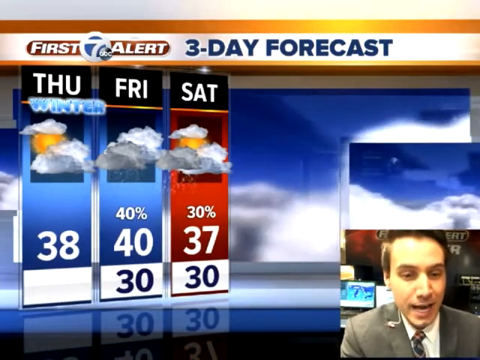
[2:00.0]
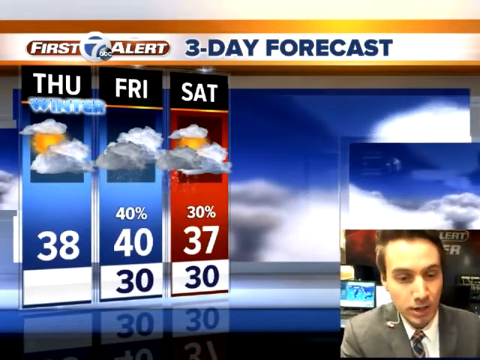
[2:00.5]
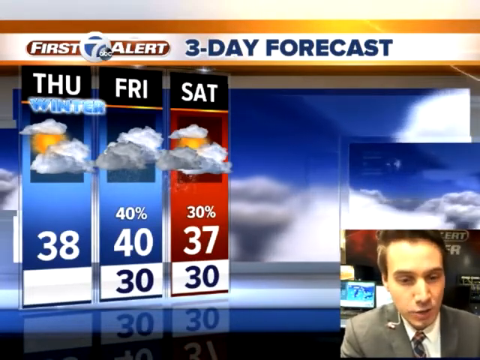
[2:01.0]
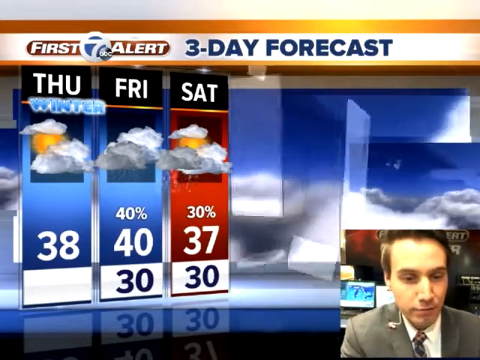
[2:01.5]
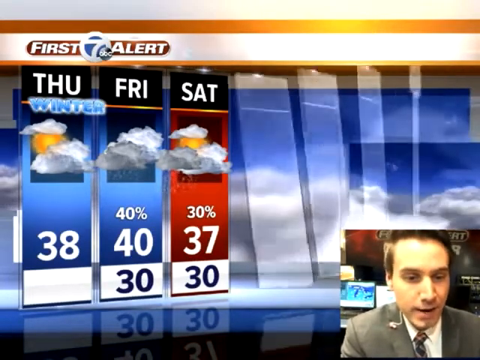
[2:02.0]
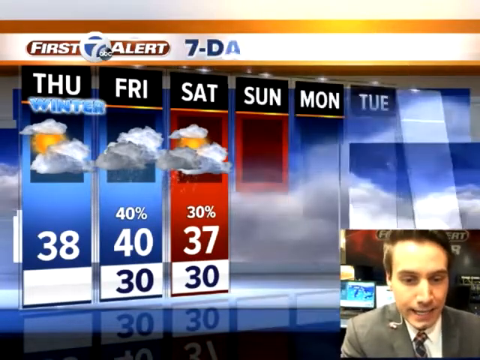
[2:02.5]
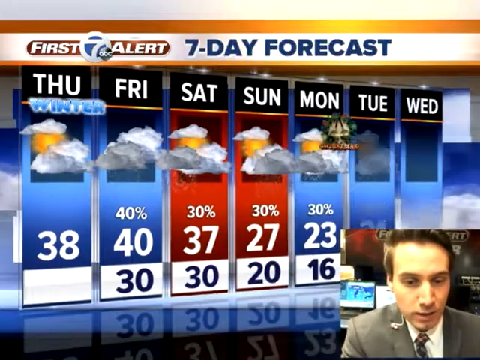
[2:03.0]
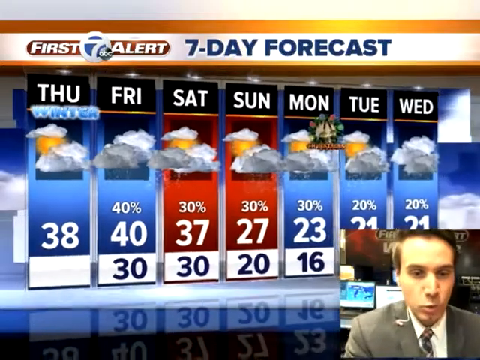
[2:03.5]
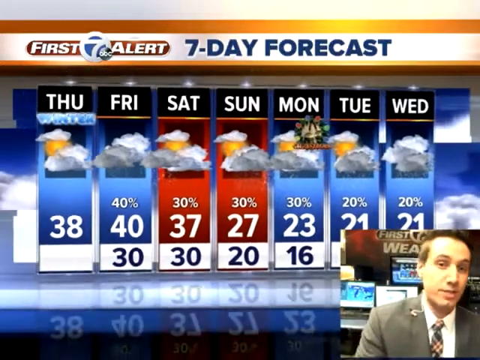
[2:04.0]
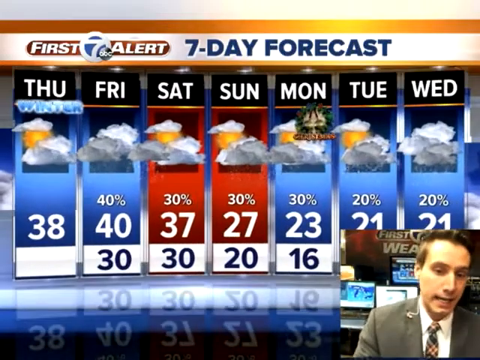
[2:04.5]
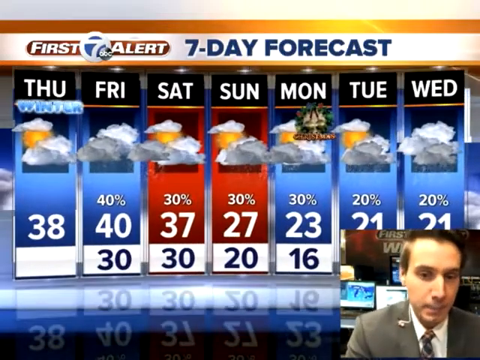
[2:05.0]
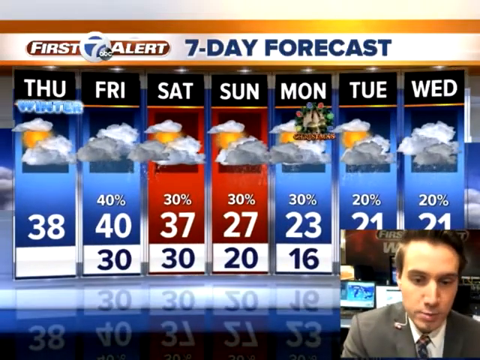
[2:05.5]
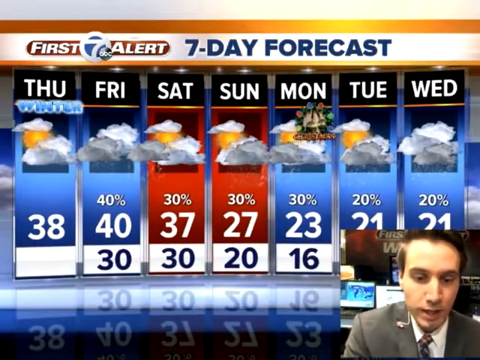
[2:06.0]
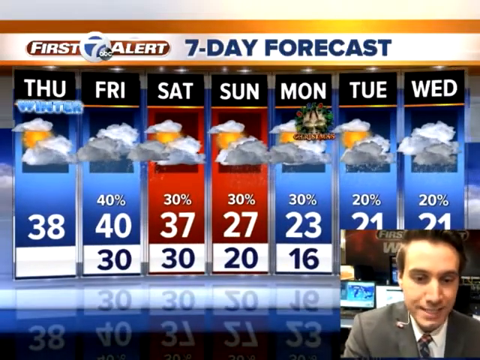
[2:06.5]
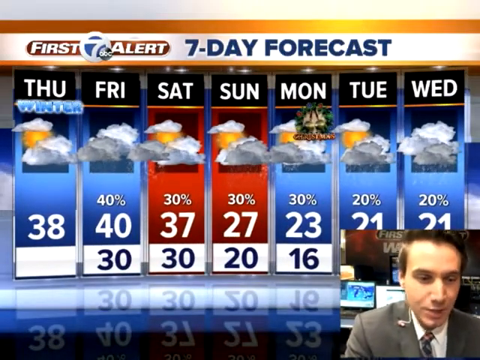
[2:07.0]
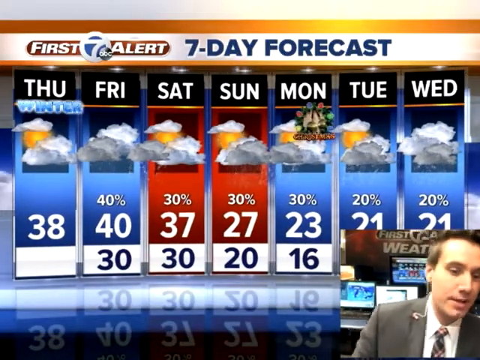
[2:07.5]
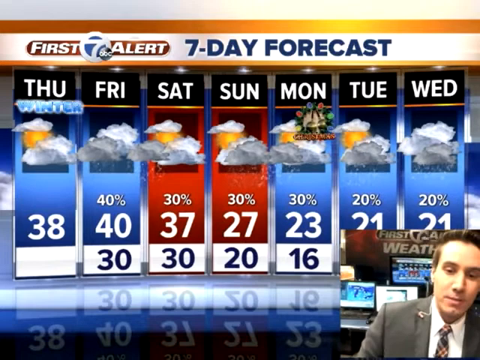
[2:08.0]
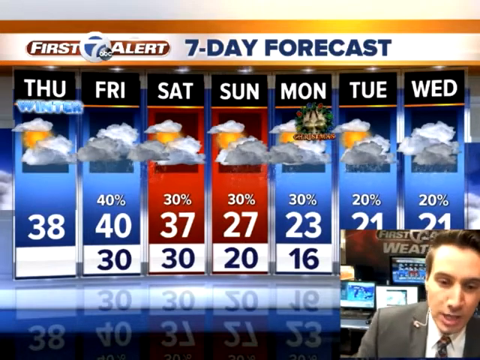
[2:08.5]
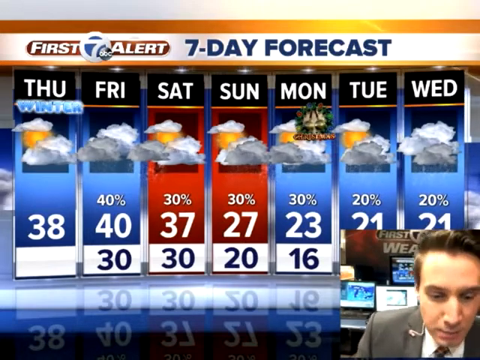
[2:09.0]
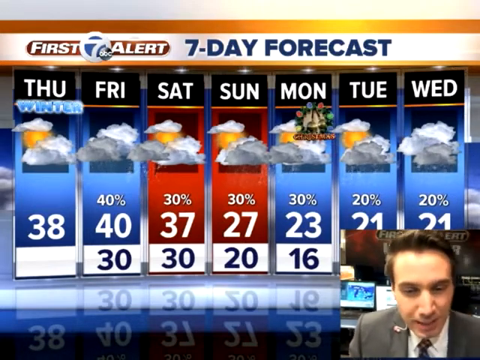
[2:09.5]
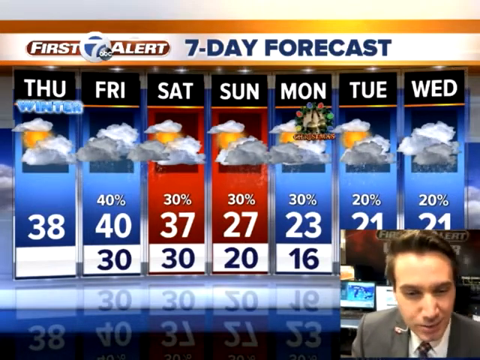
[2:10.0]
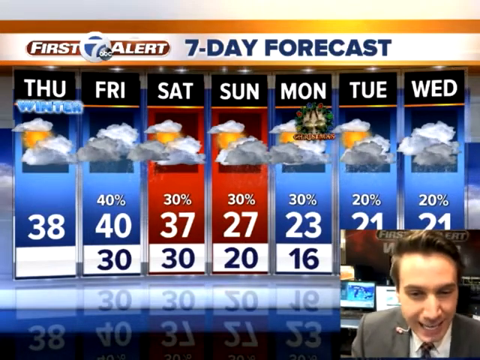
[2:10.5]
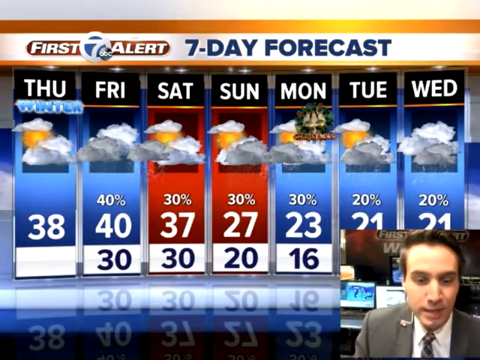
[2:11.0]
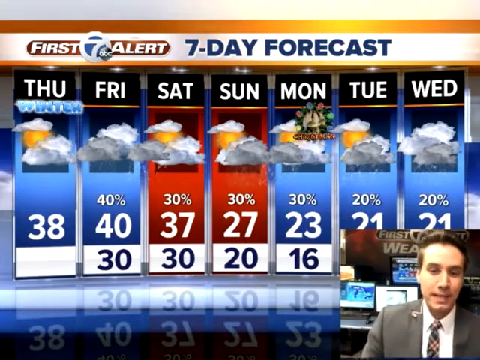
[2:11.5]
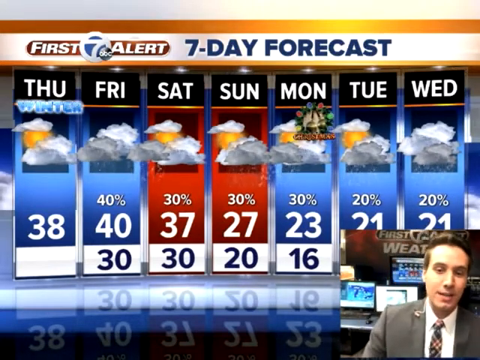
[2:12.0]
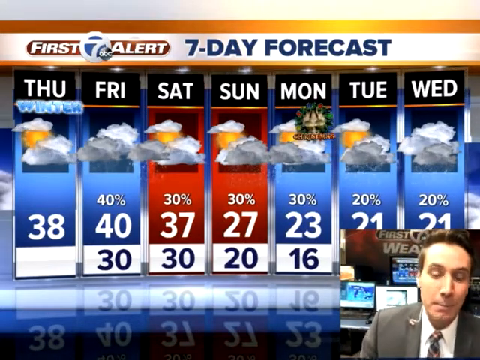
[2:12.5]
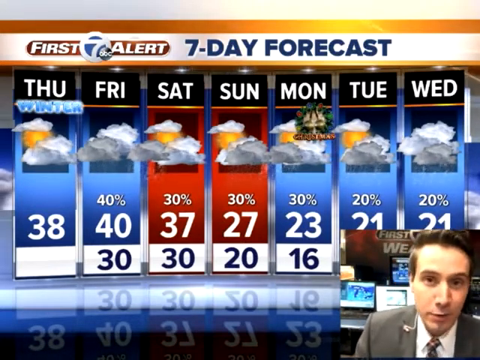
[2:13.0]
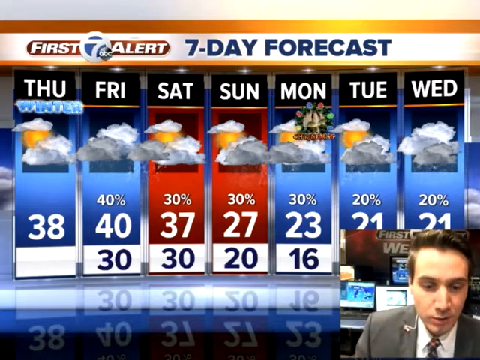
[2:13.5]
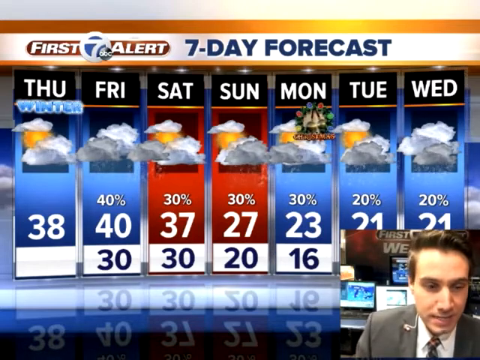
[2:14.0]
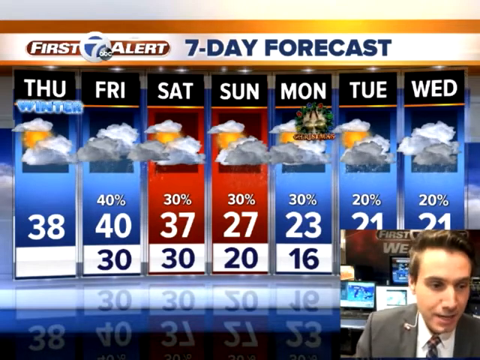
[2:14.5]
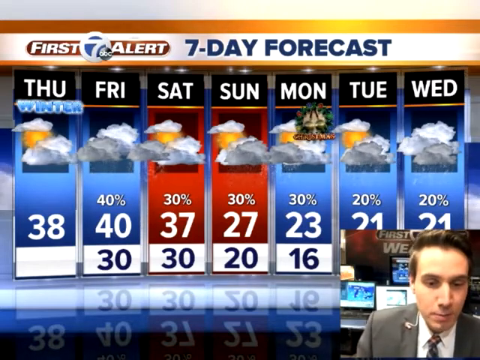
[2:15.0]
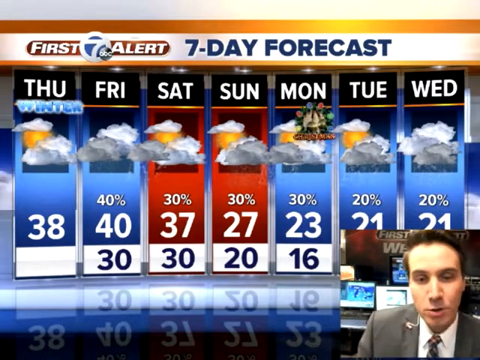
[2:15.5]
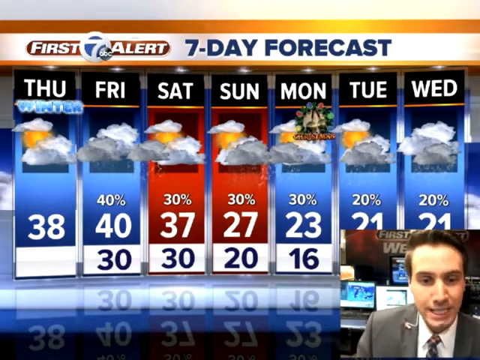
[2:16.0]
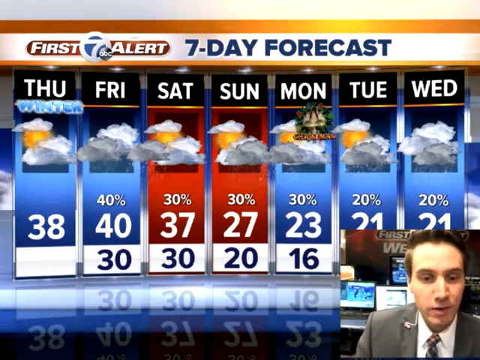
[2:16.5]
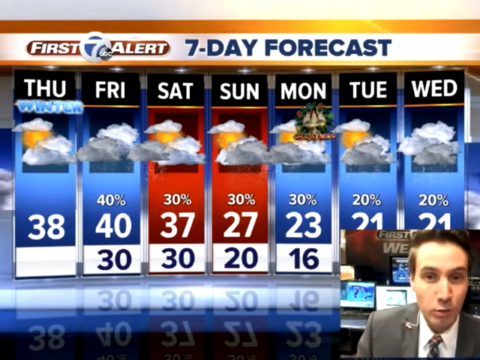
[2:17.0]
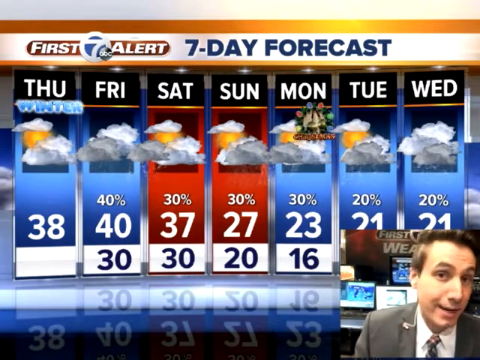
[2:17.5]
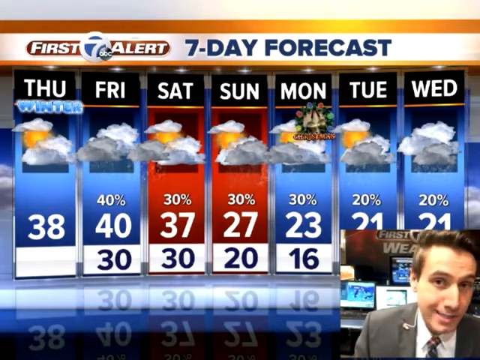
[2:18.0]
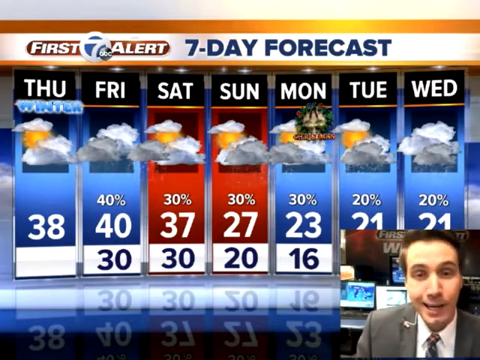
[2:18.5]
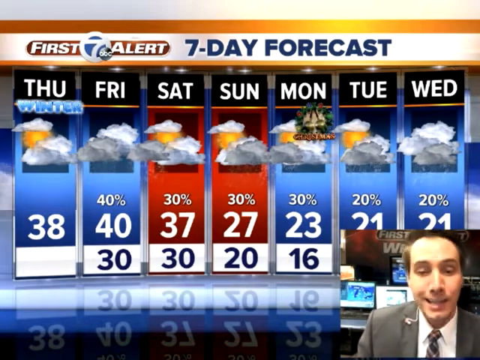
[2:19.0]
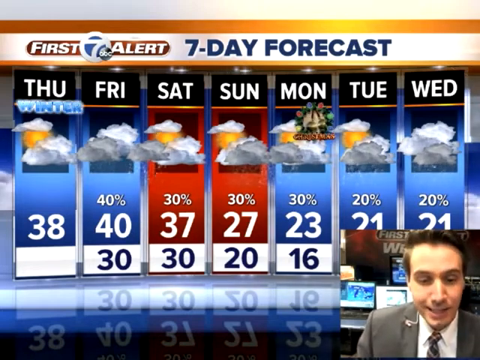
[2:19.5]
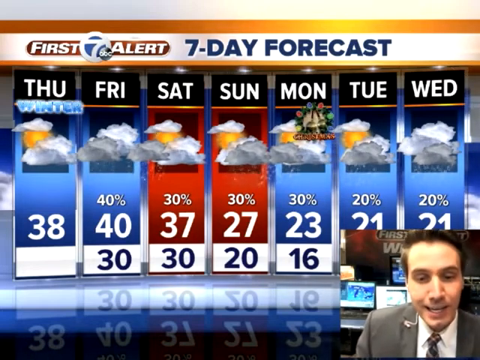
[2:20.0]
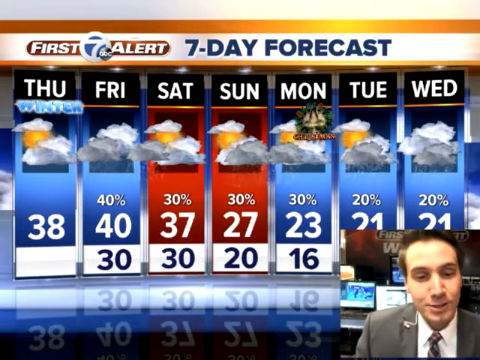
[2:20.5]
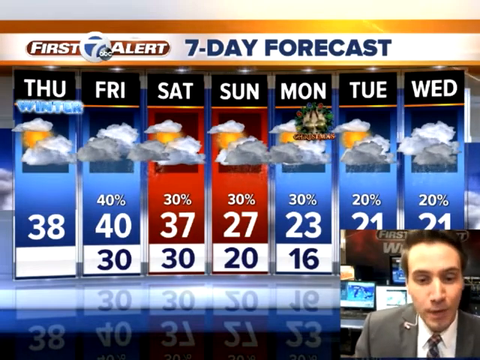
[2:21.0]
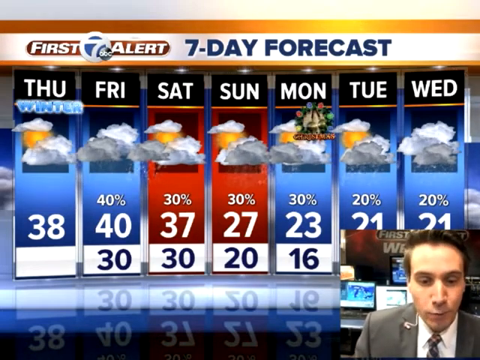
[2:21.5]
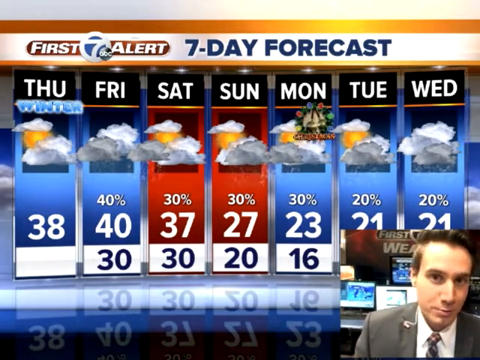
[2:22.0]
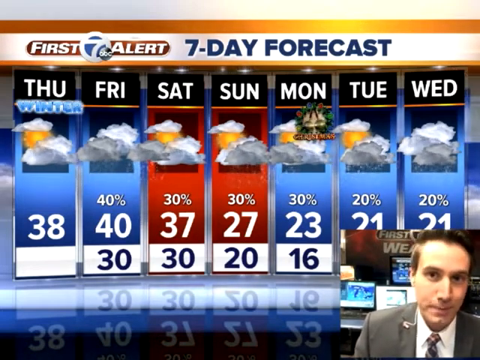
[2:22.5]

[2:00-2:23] Friday shows a greater chance of rain, and Saturday a slight chance of rain with temperatures lower than Friday's. A 7-day forecast is added: Sunday has a 30% chance of rain, Monday 30%, Tuesday 20% and Wednesday 20%. Temperatures from Sunday to Wednesday decrease: 27 degrees Fahrenheit, 23 degrees Fahrenheit, 21 degrees Fahrenheit and 21 degrees Fahrenheit, with a low of 15 degrees Fahrenheit.